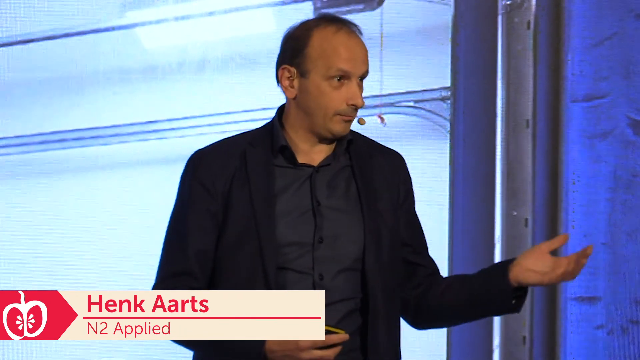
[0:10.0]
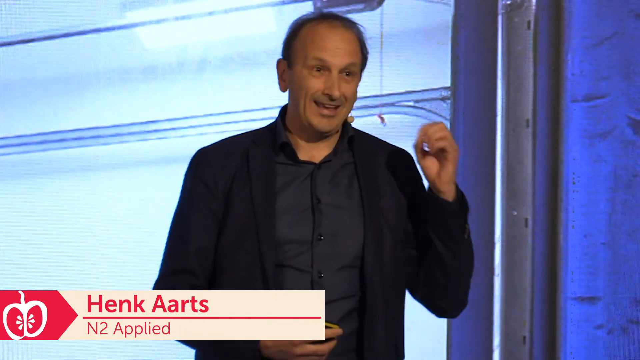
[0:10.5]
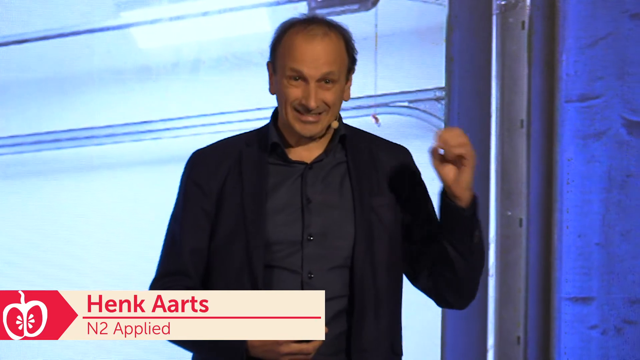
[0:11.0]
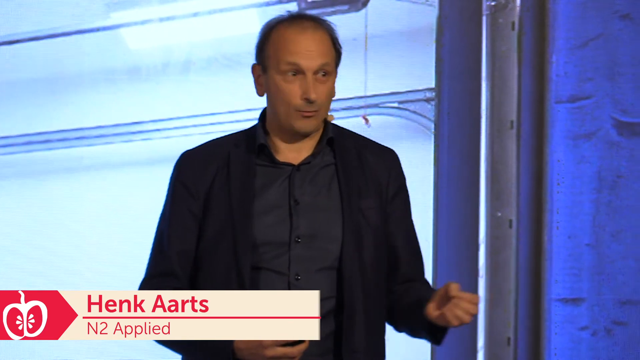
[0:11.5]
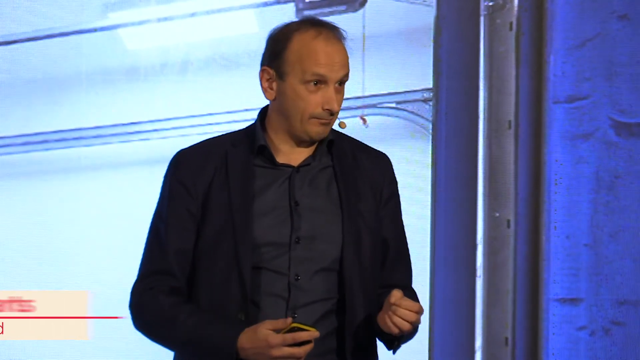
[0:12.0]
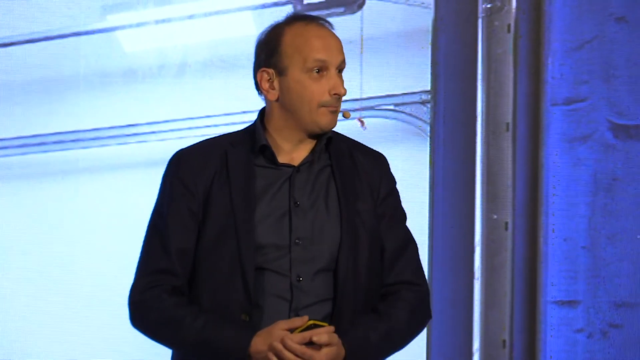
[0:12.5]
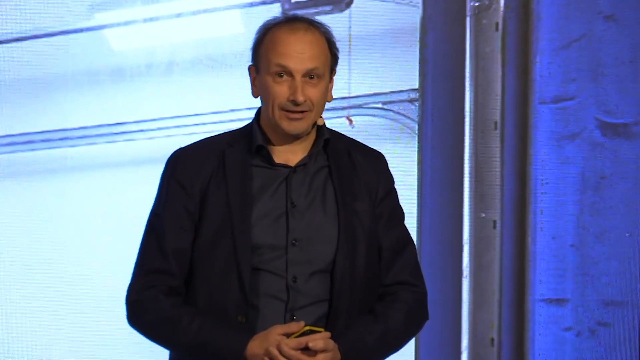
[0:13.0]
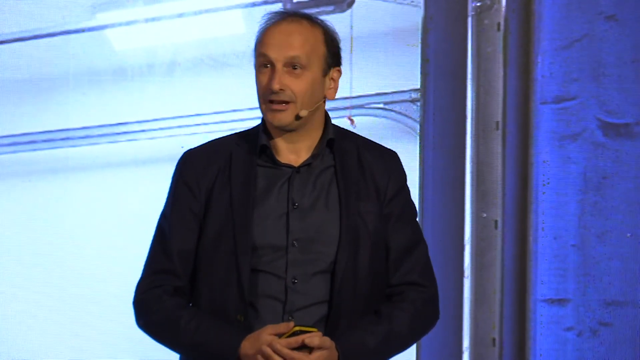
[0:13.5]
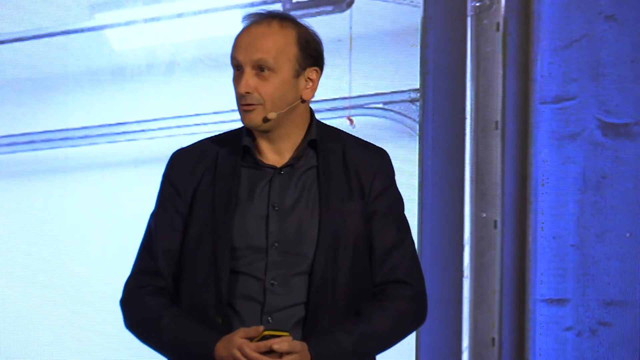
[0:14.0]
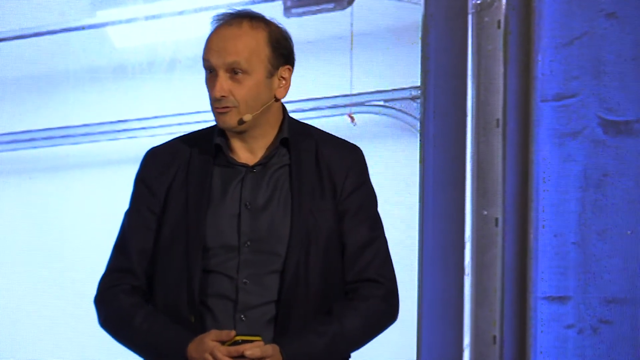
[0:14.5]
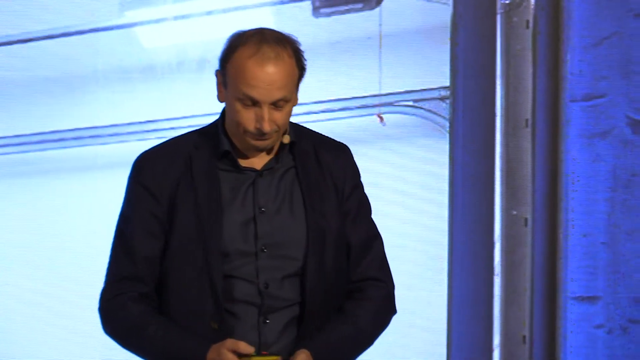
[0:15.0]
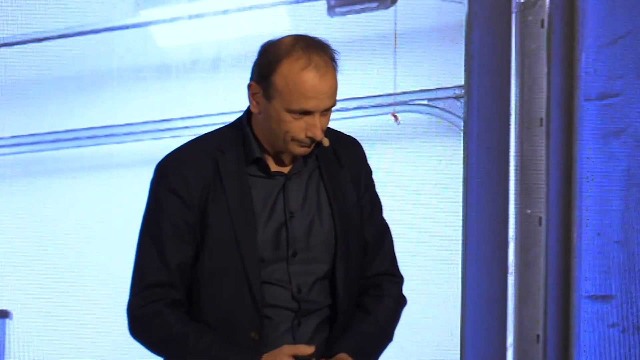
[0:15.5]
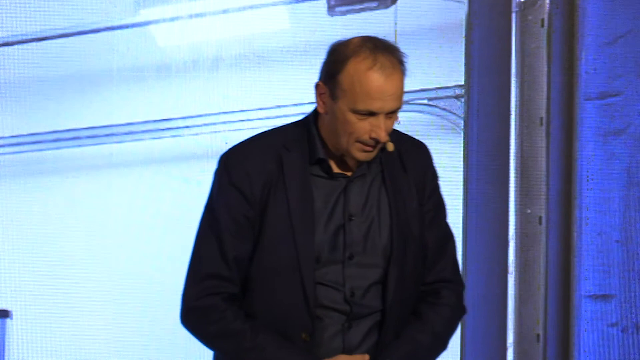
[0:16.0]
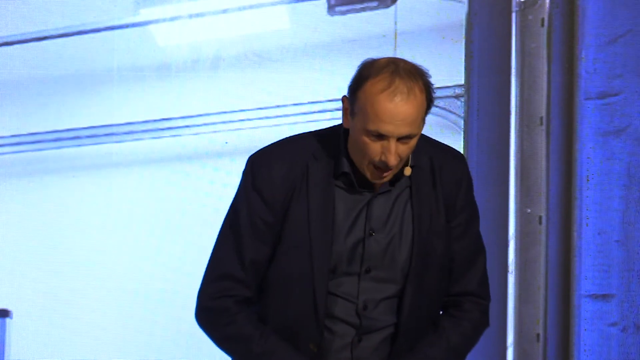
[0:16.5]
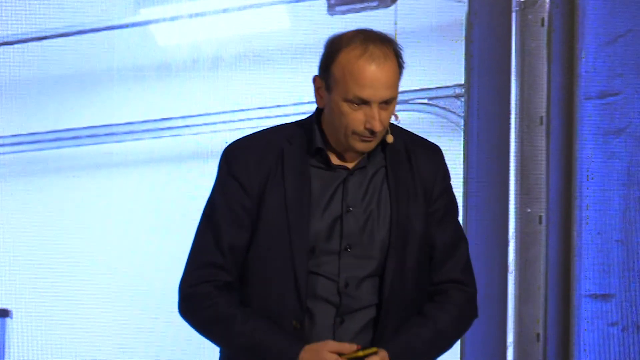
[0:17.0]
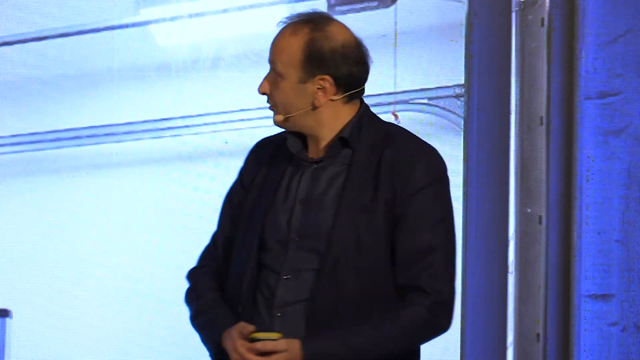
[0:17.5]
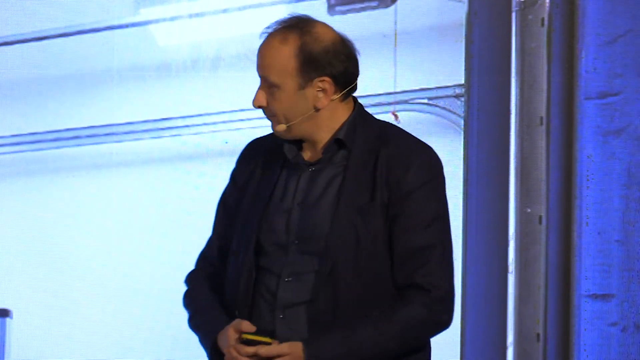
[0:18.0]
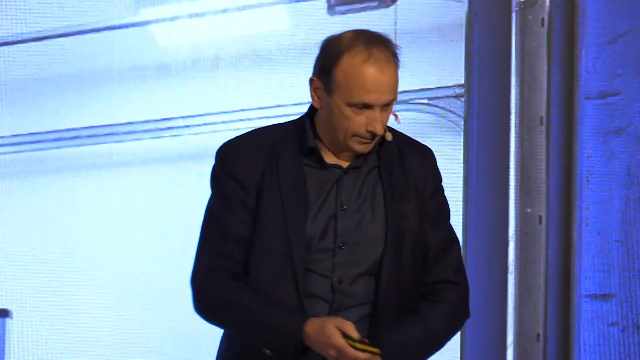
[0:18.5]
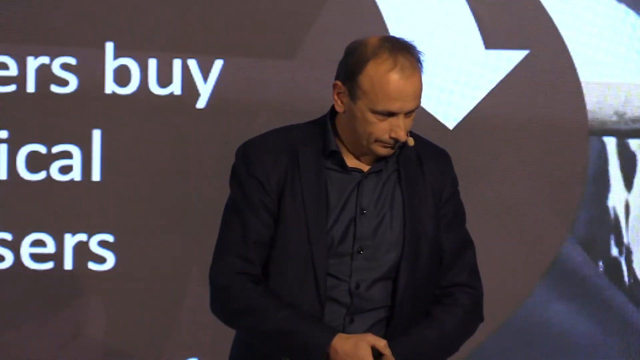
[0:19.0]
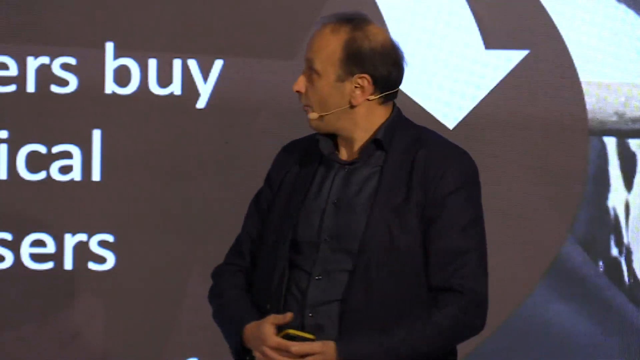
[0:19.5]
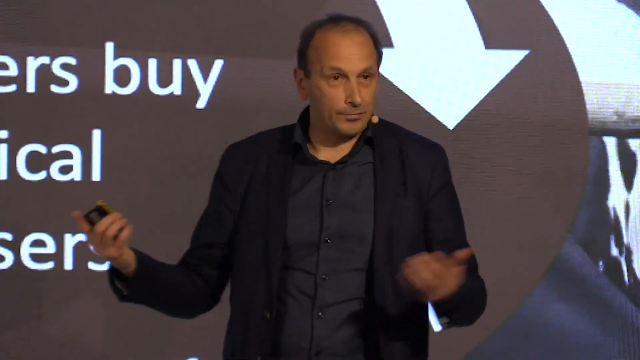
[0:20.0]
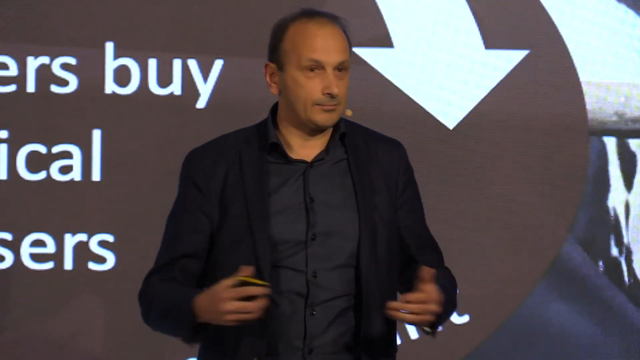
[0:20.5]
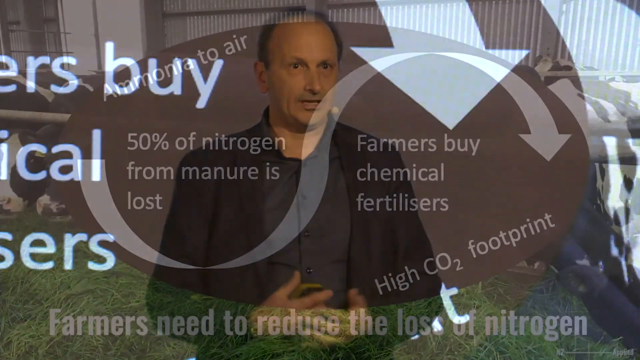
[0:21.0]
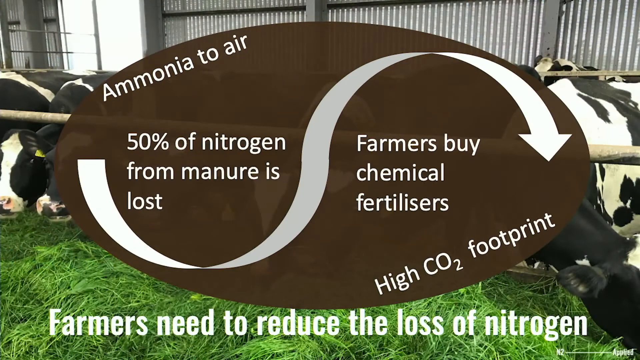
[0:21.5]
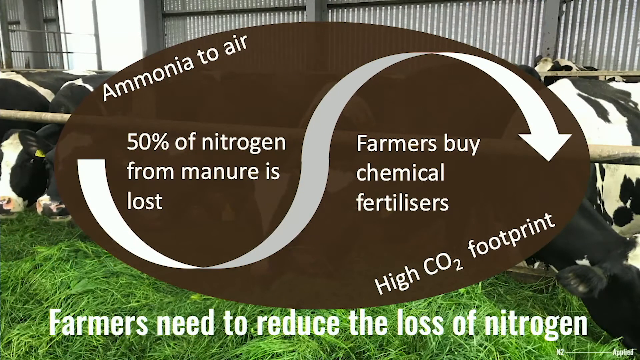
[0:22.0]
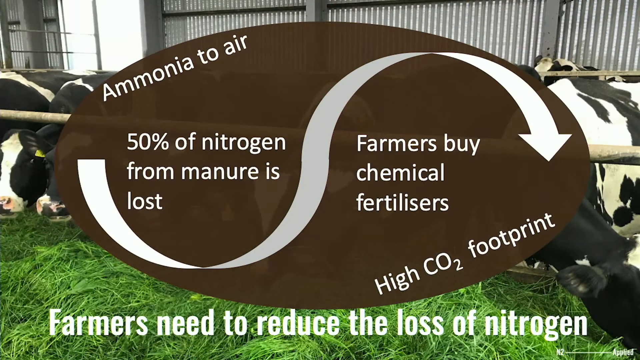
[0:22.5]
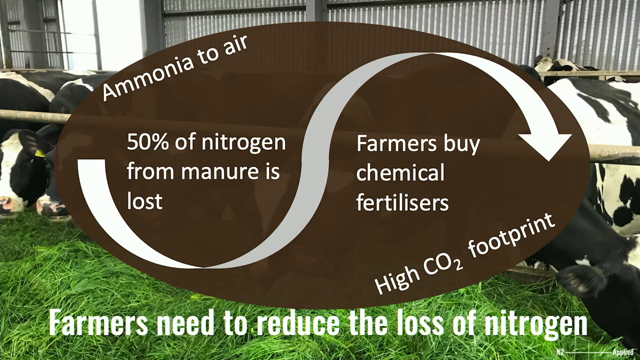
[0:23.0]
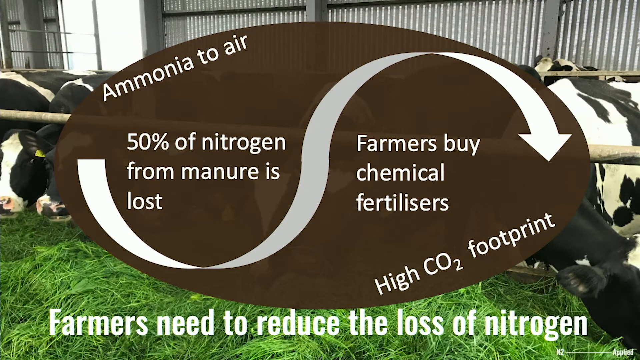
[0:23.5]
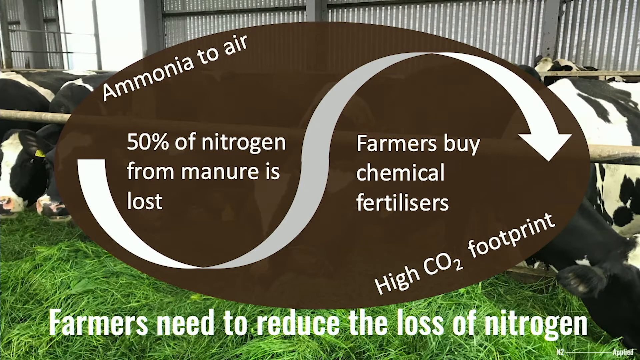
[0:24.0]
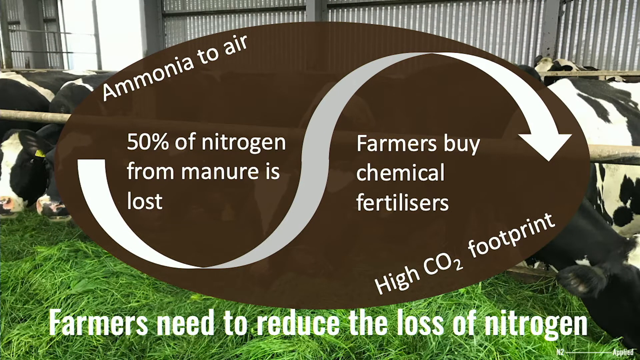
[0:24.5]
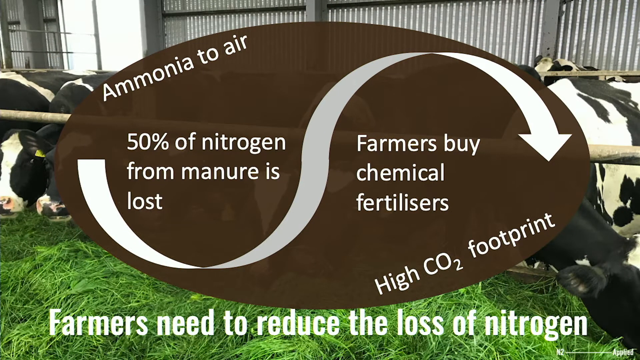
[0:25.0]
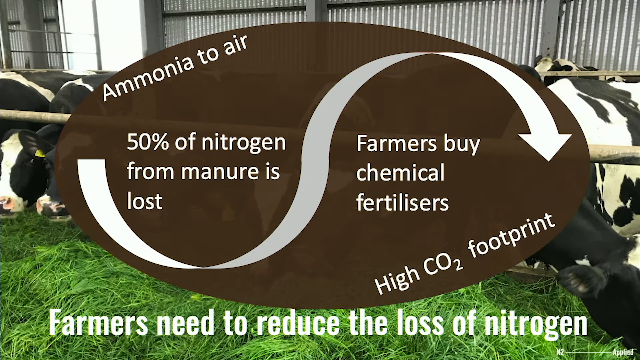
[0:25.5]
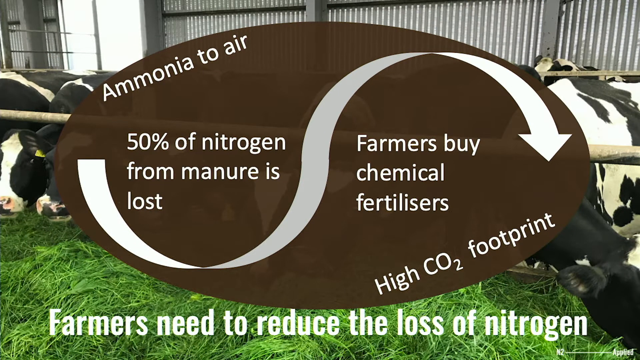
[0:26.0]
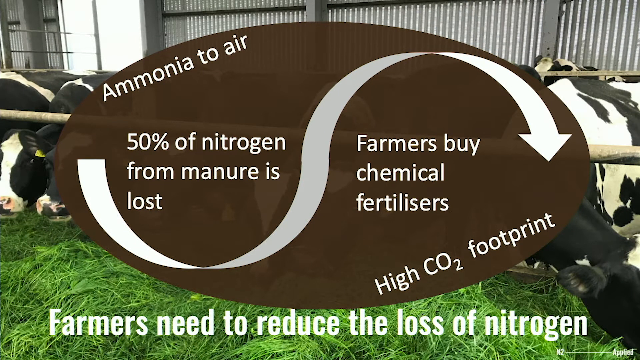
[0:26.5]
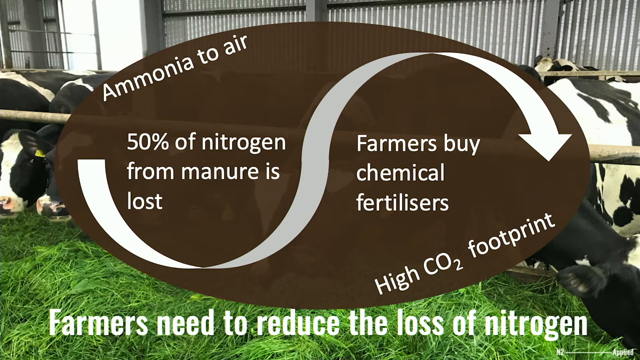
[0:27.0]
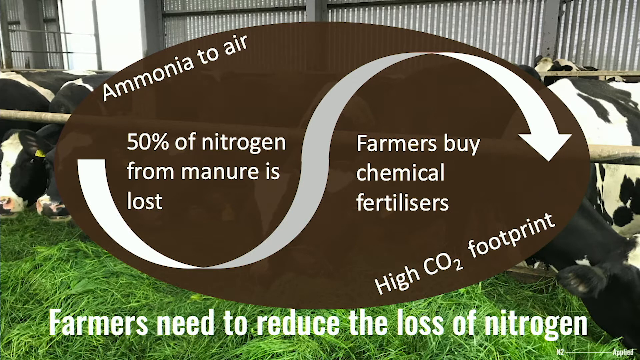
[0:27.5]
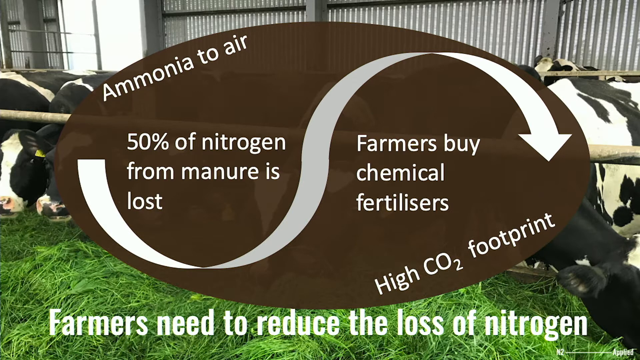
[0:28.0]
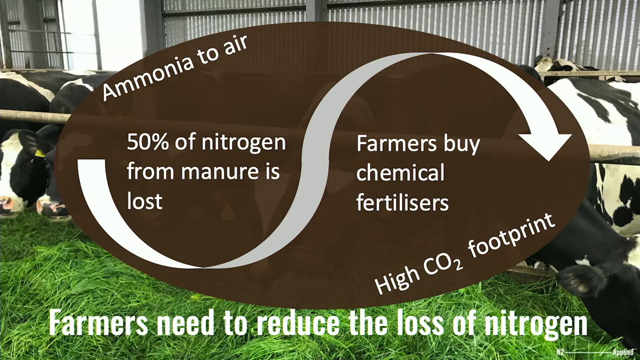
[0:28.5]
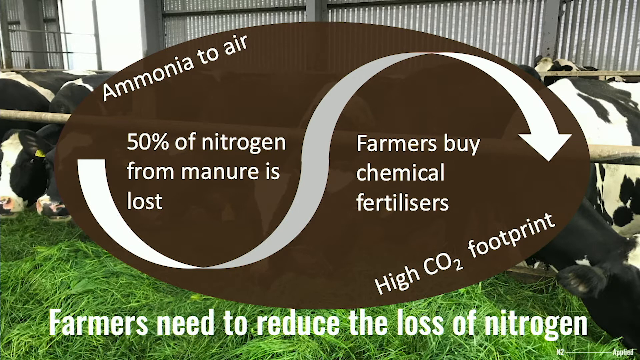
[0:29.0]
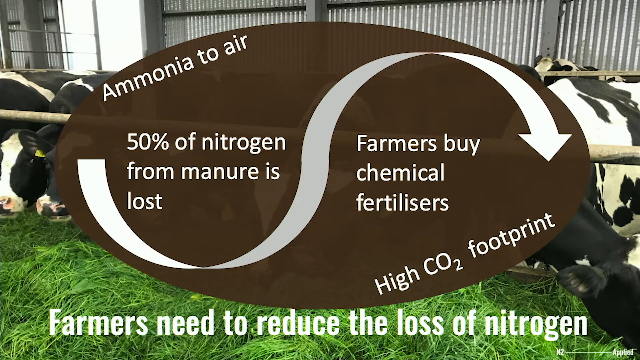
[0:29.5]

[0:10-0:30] A man, approximately in his late 40s, stands in front of the camera in a close-up from the waist up, wearing a black suit and a black button-down professional shirt without a tie. He is turned somewhat eastward with his left hand extended palm up. He wears a microphone from behind his left ear, extending from beneath the ear toward his mouth. In the lower left corner, a banner reaches from the left corner to the center of the bottom of the frame and reads "Hank Arts" in red text on a white background; to its left is a white logo or icon of an apple. He is speaking to the viewers or an audience, and his head moves from the right all the way to the left. He holds what might be a phone in his right hand, and it stays in his hand as his hands move back and forth, extending outward. He then uses his left hand to make a circle with his thumb gripping the other fingers, looks down and clicks or pushes a button, perhaps for a slideshow behind him. Information suddenly pops up, showing what might be a flowchart of food processing. In the background, black and white cows stand in what might be a processing plant, and in front of them is a brown and white flowchart. From the left it reads "ammonia to air", with "50 percent of nitrogen from manure is lost" below that. The flowchart extends to the right and then says "farmers buy chemical fertilizers" and "high CO2 footprint".